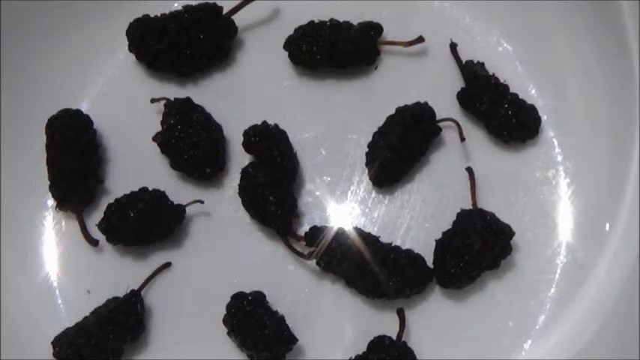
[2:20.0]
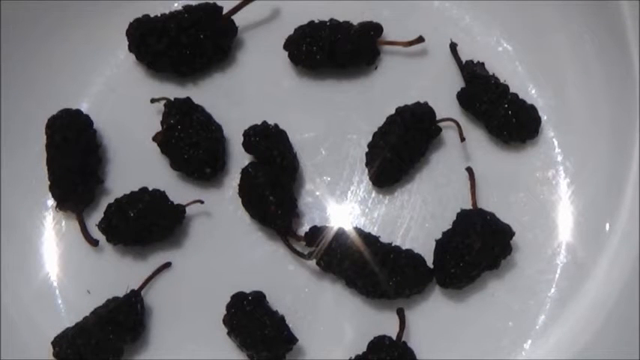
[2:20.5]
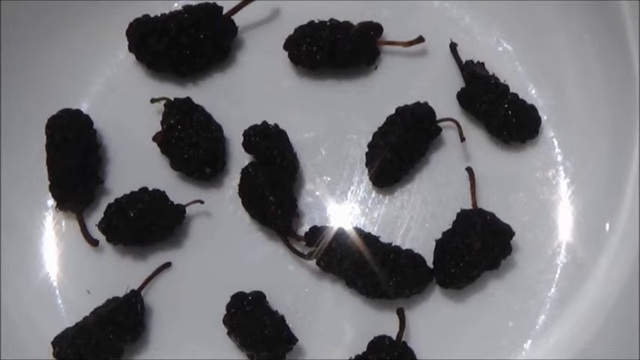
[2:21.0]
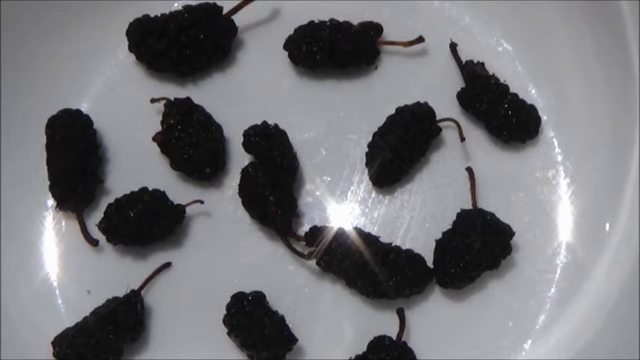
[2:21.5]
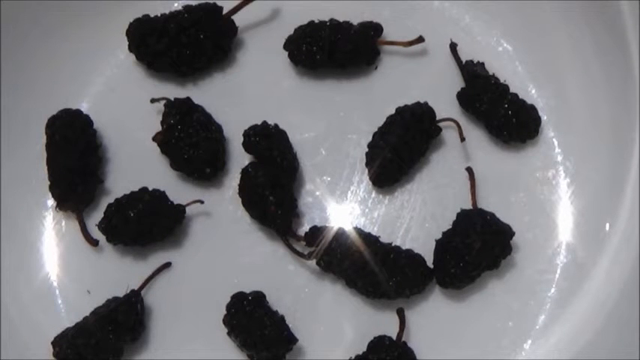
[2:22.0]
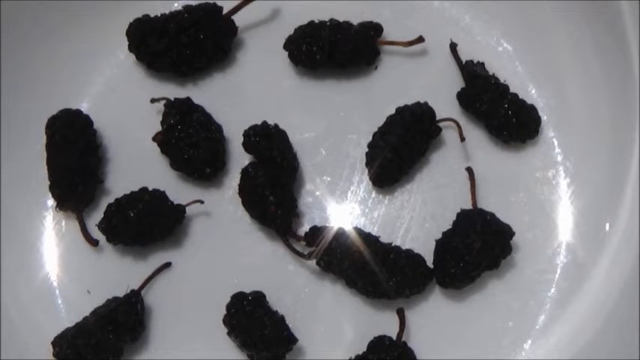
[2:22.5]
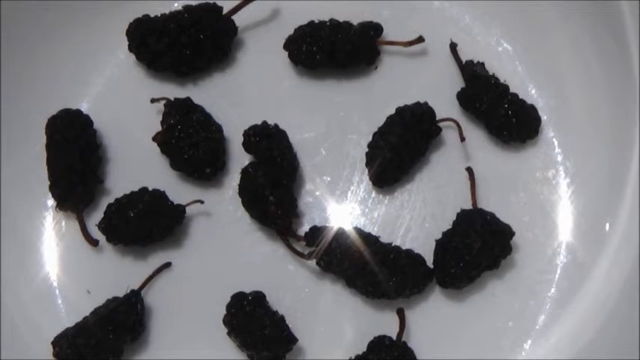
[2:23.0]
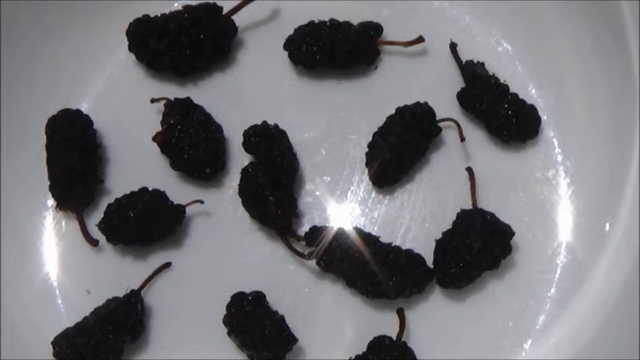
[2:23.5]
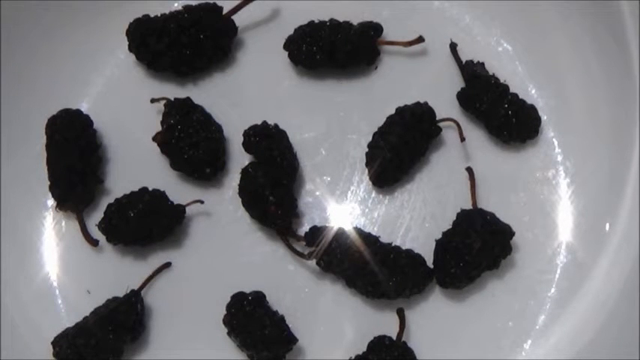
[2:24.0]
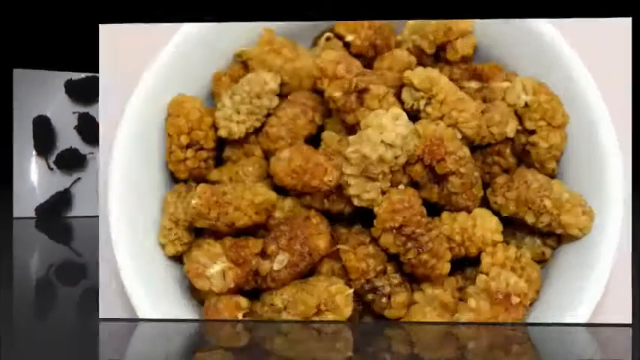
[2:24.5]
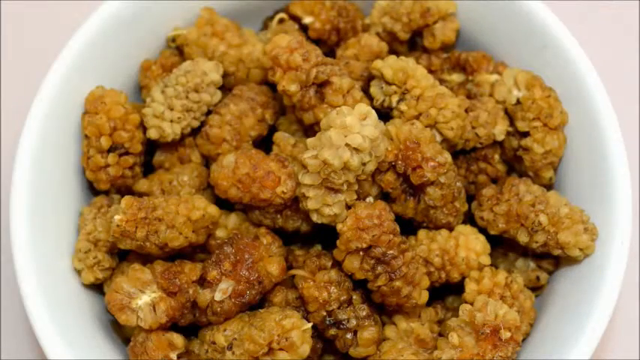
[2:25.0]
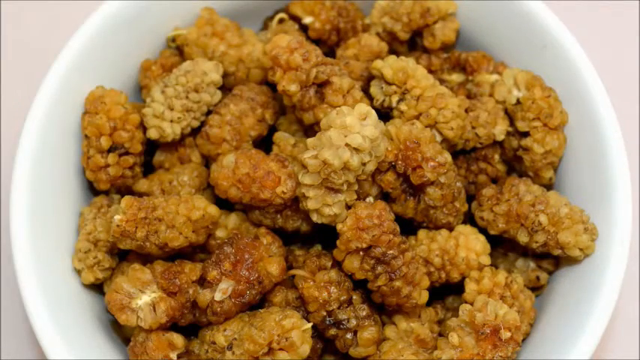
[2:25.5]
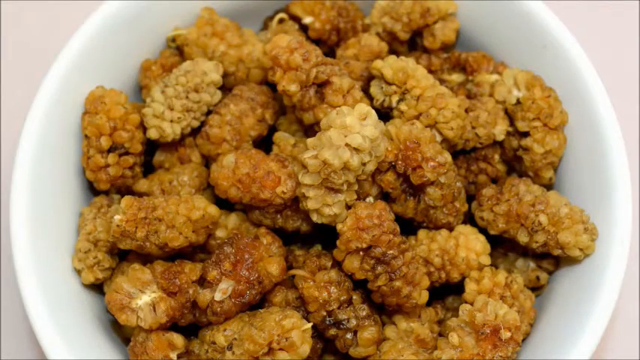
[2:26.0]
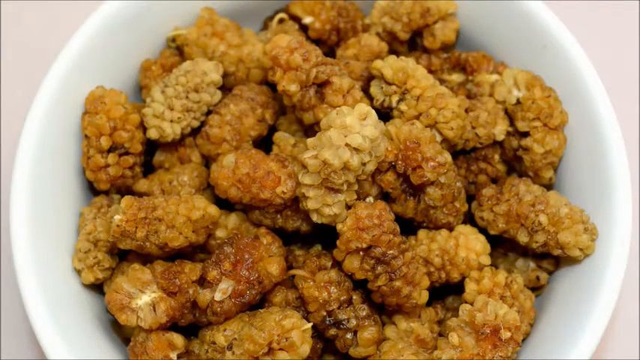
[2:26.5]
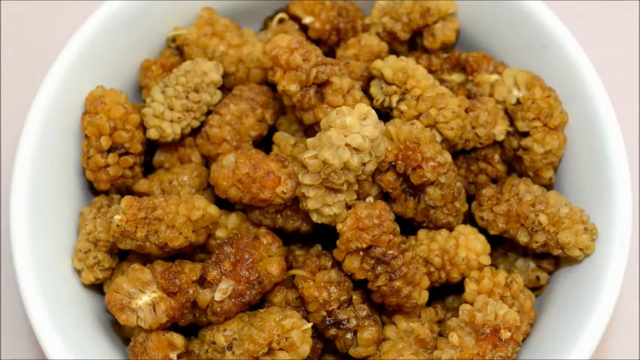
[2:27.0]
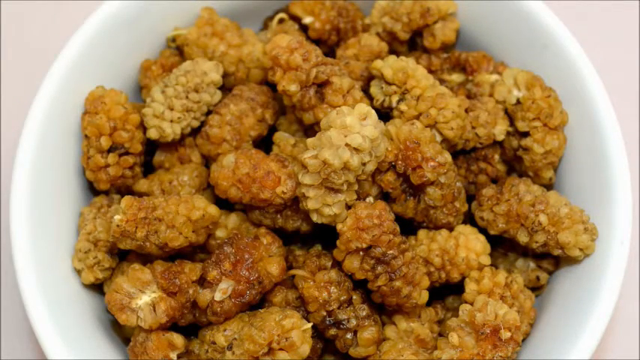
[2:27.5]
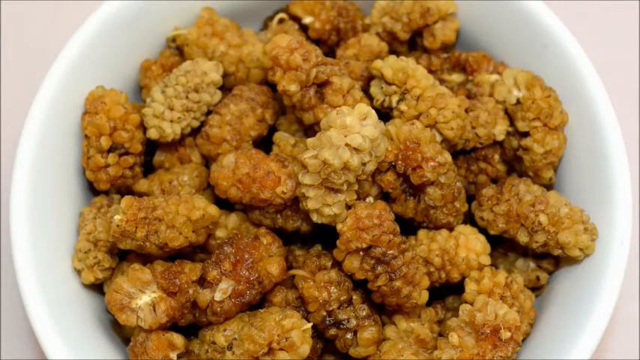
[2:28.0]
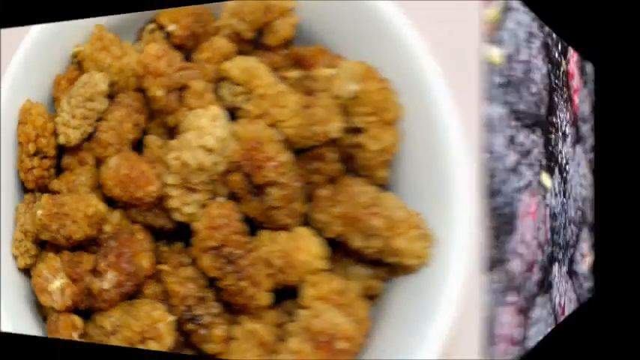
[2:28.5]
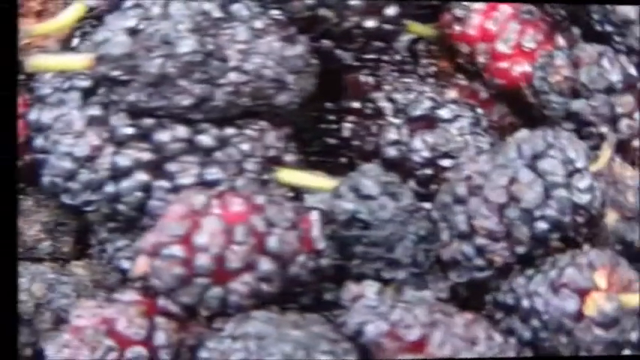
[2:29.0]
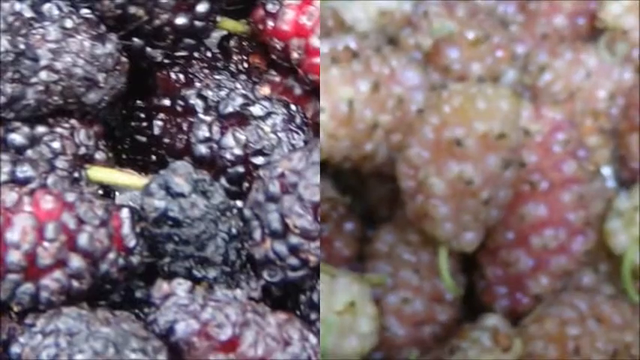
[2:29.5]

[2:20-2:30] A white bowl holds black or very dark mulberries; the bowl is not full, with about 14 mulberries in it. A very bright light reflection is visible in the bowl. The picture changes to a heaping full white bowl of yellowish-tan mulberries ranging in color from light beige to almost a cinnamon color. It then switches to a split screen divided by a line, with darker mulberries on the left and very light, white, almost translucent-looking mulberries on the right. The split-screen images turn out to be video, as the camera is moving.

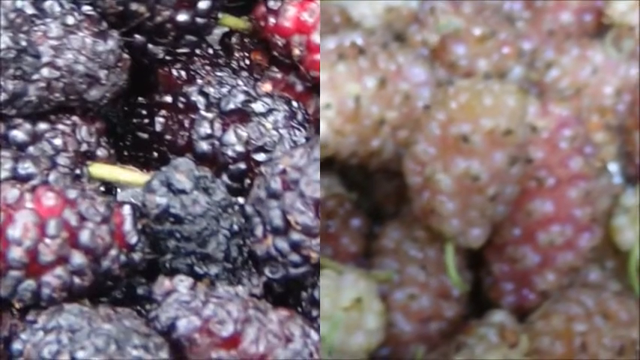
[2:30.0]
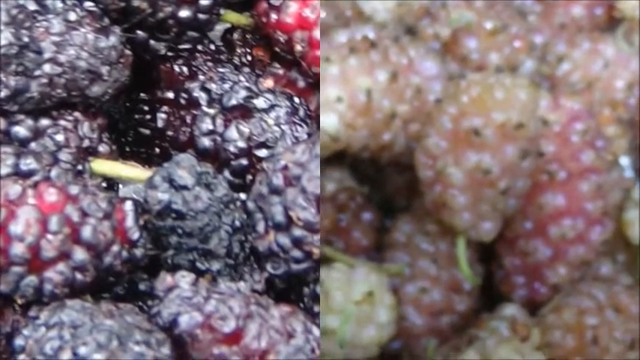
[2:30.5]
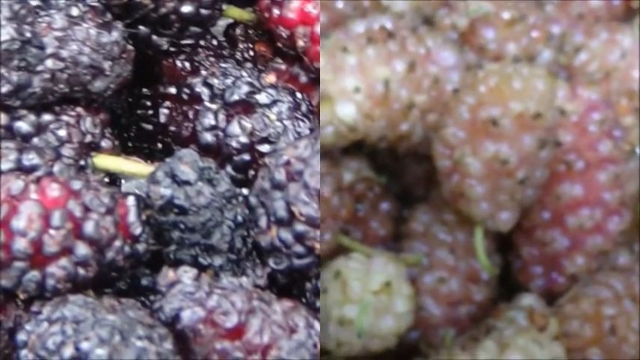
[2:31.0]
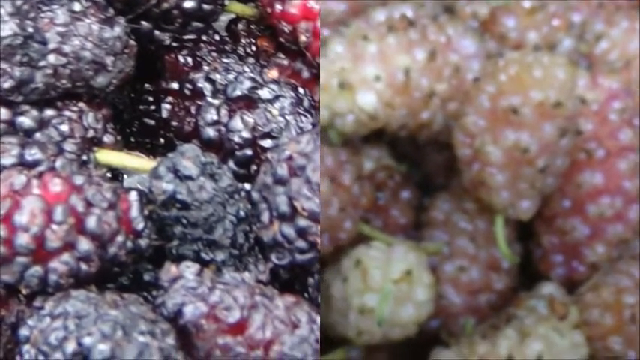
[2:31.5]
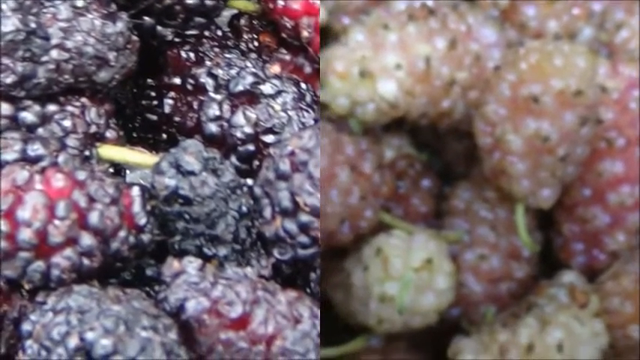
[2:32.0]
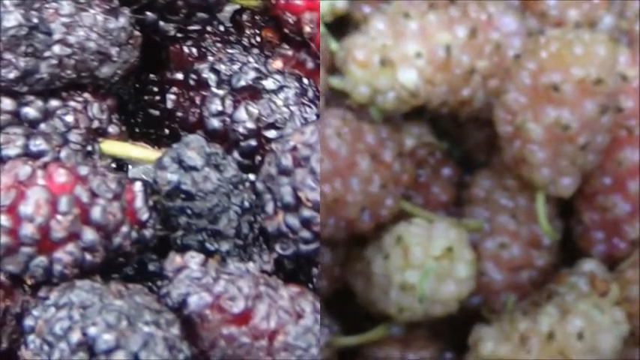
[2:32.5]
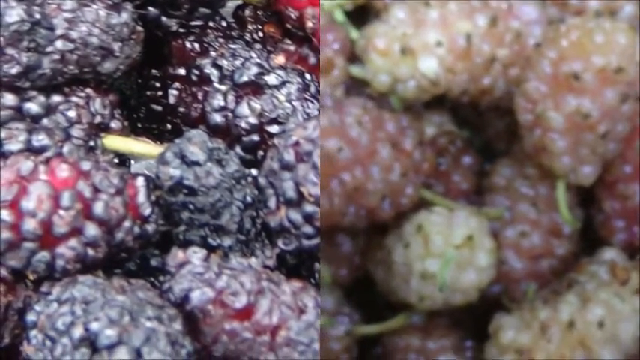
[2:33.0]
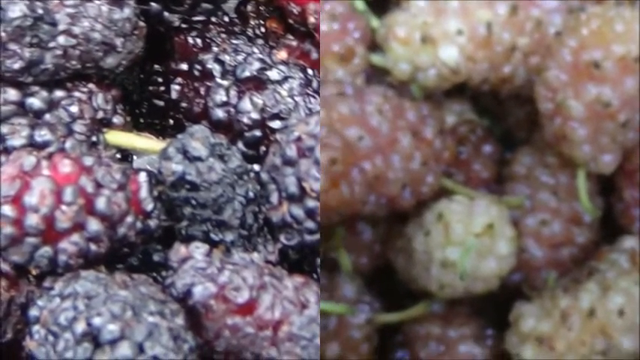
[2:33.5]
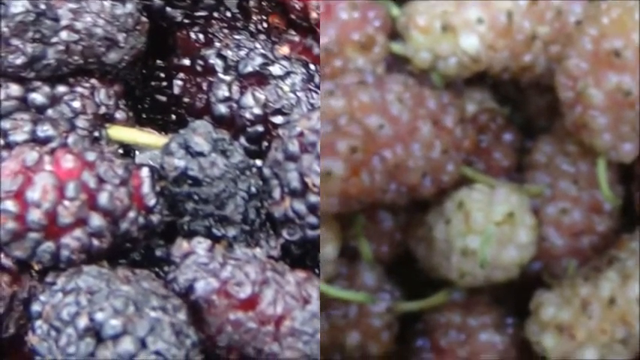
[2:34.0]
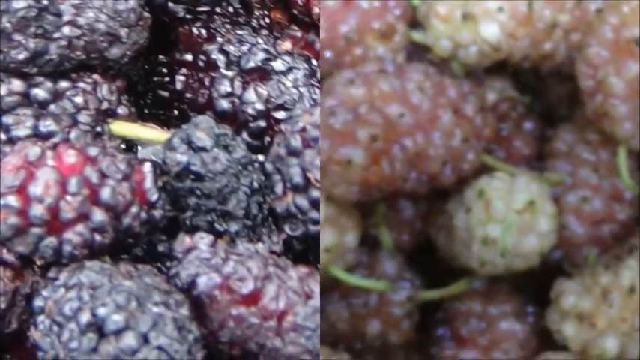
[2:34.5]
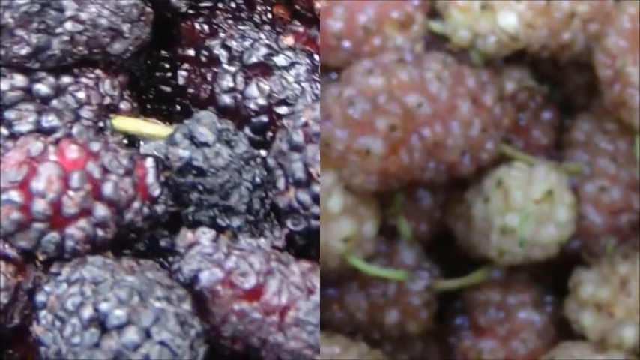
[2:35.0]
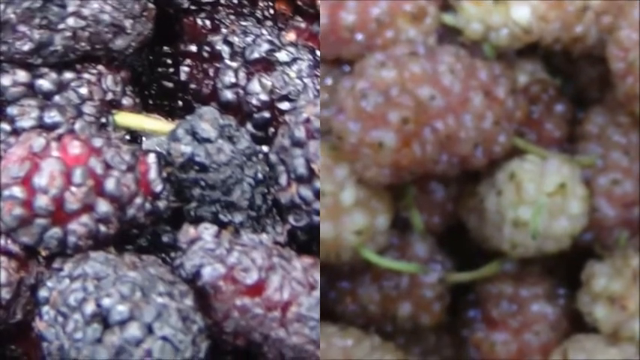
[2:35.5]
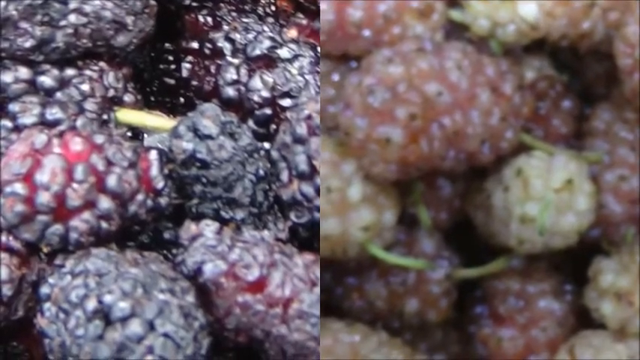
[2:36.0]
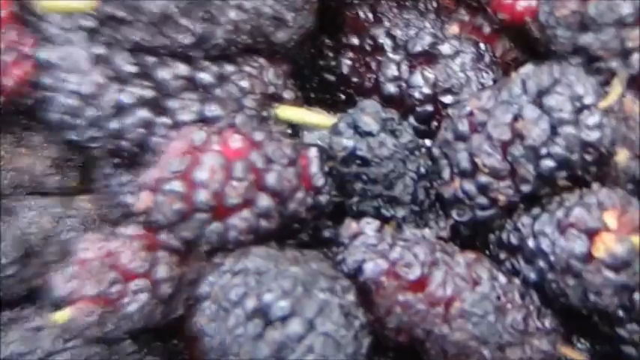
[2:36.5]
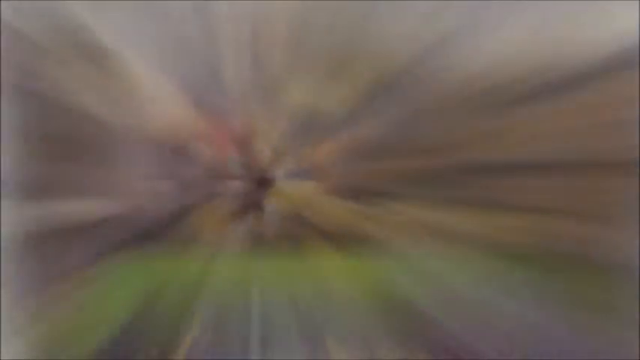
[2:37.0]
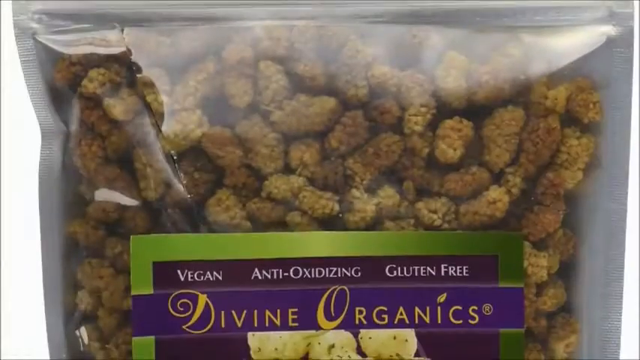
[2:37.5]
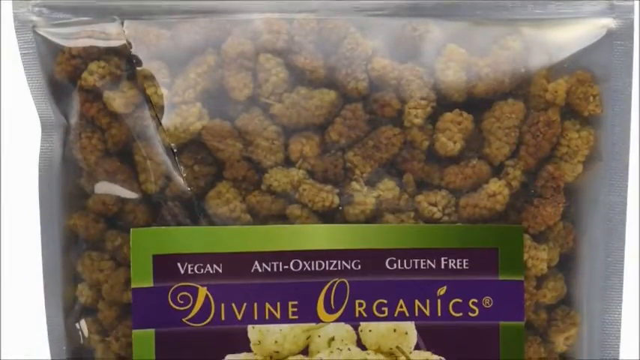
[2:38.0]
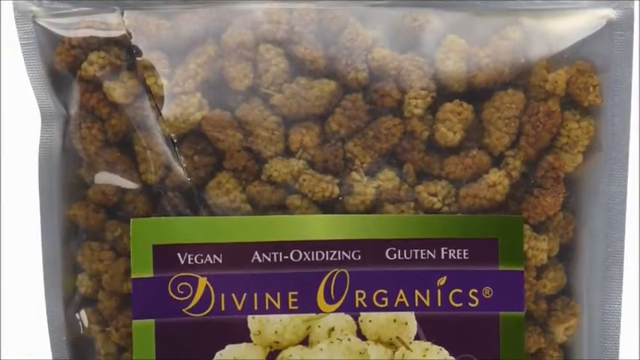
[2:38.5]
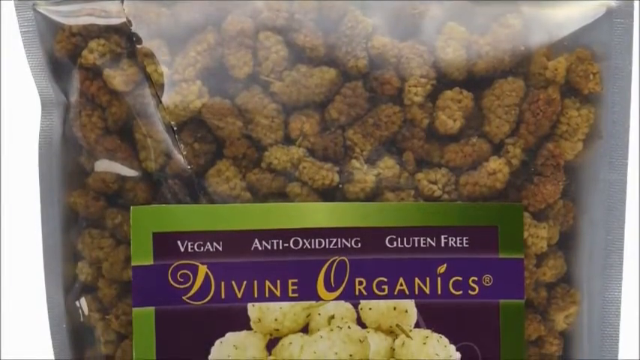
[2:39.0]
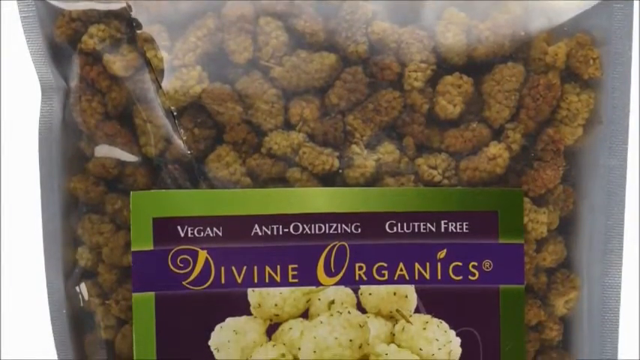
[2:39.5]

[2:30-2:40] Two side-by-side images of picked mulberries fill a split screen; the mulberries are not on a bush but piled on top of each other and look very wet. On the left are very dark purple, dark red mulberries, smashed and piled on top of each other and very wet looking. On the right is a large pile of very light-colored mulberries ranging from almost white to a very light pink. The left image is a photo, while the right is a video, scanning and moving across the mulberries rather than staying stationary. The view then flips to an enlarged picture in which the entire screen is just the dark mulberries, and then to a bag of what looks like dehydrated light-colored mulberries. They are in a sealed plastic bag with a clear, see-through front and a label reading "Divine Organics," "vegan," "anti-oxidizing" and "gluten-free," along with a picture of the mulberries.